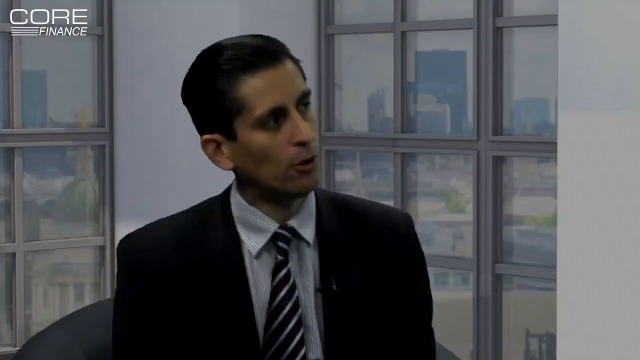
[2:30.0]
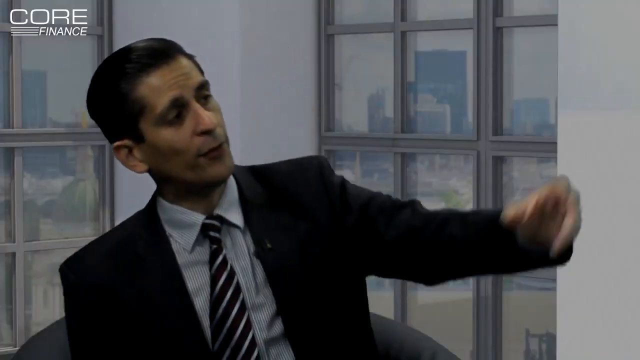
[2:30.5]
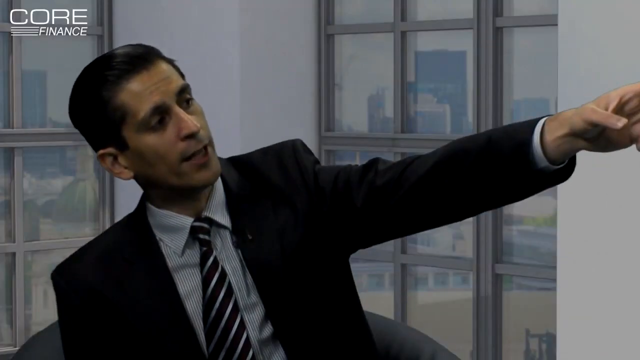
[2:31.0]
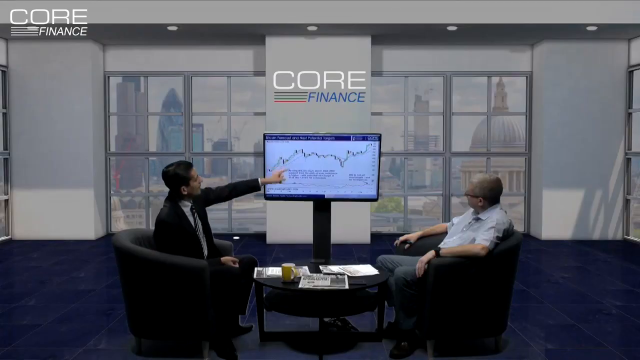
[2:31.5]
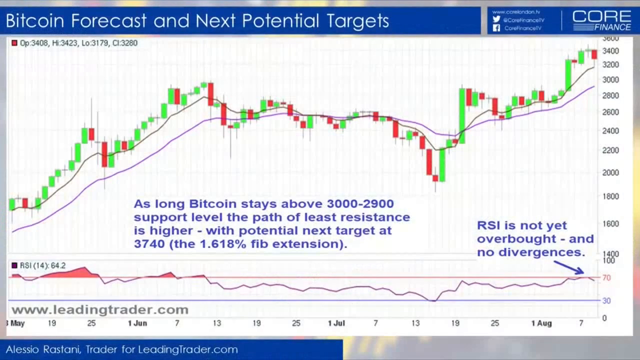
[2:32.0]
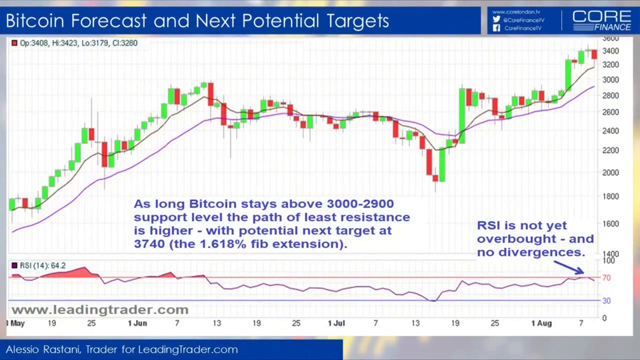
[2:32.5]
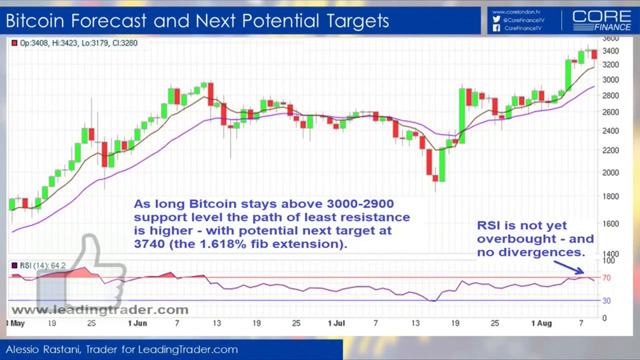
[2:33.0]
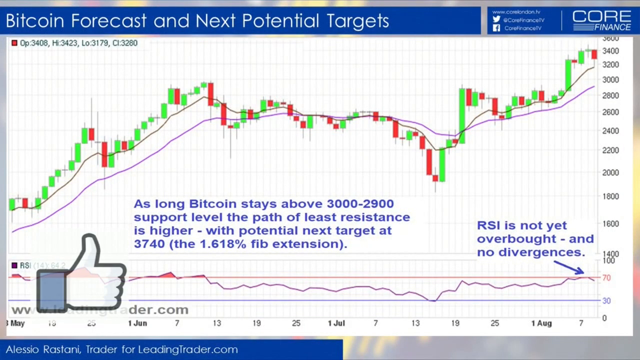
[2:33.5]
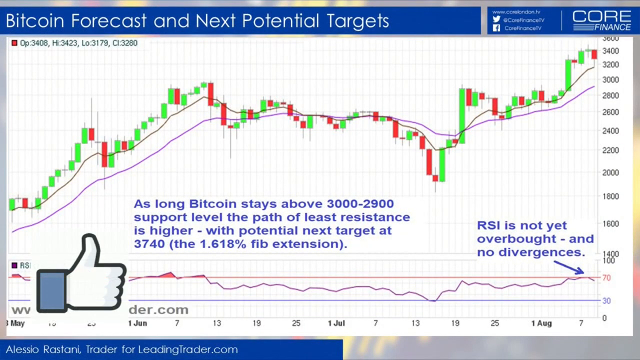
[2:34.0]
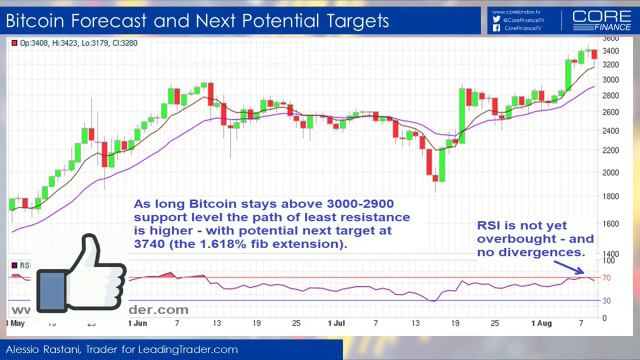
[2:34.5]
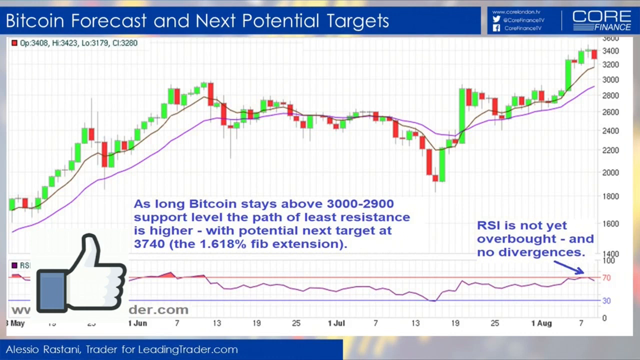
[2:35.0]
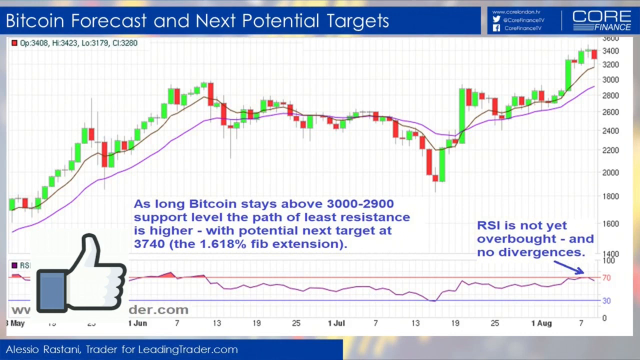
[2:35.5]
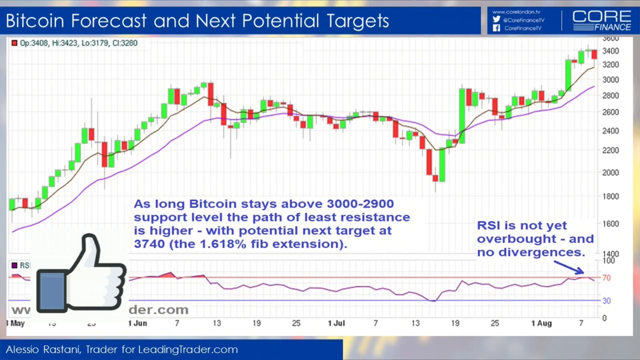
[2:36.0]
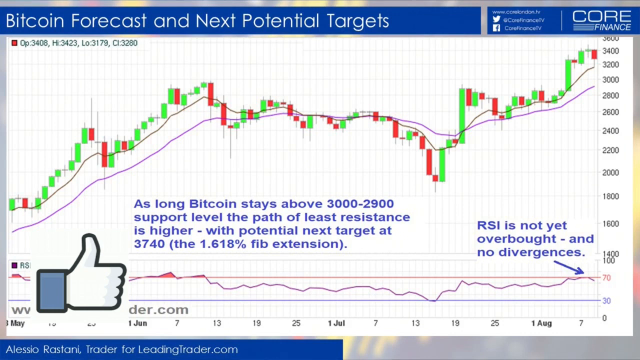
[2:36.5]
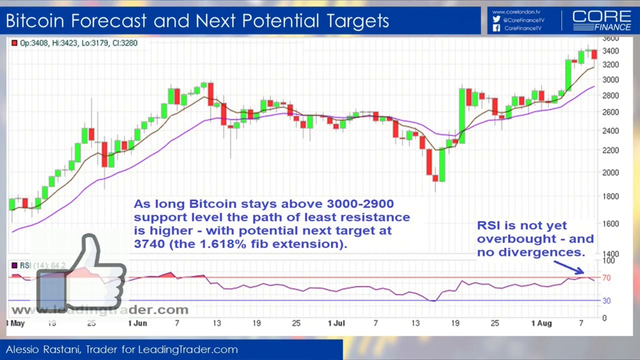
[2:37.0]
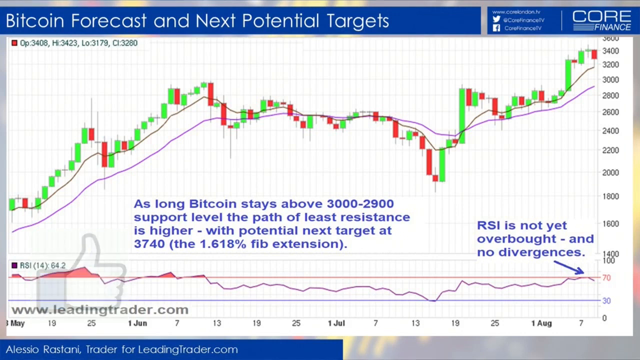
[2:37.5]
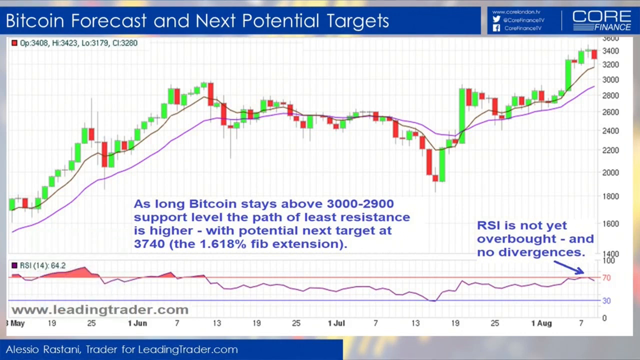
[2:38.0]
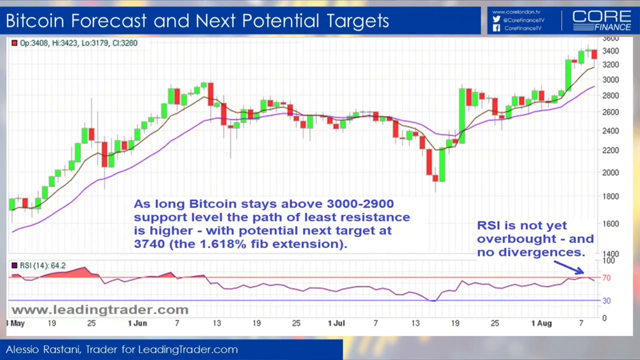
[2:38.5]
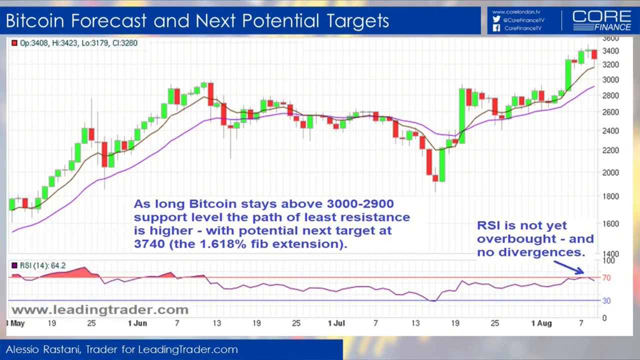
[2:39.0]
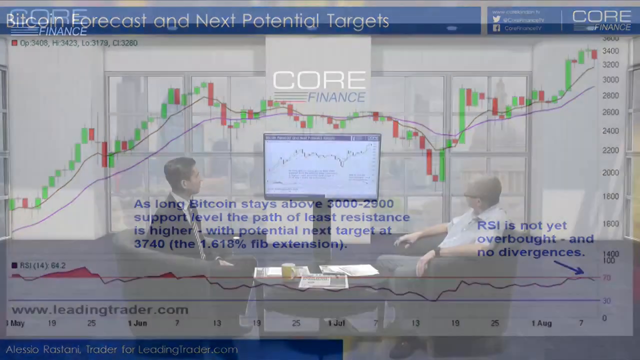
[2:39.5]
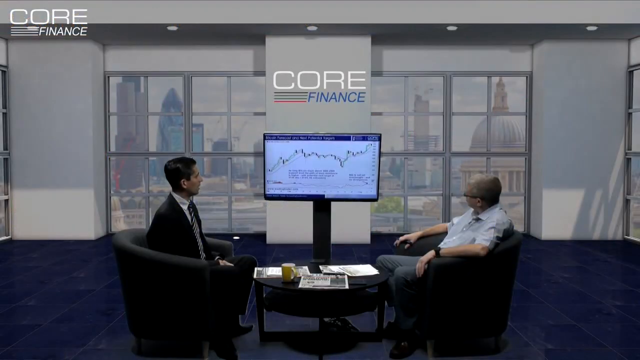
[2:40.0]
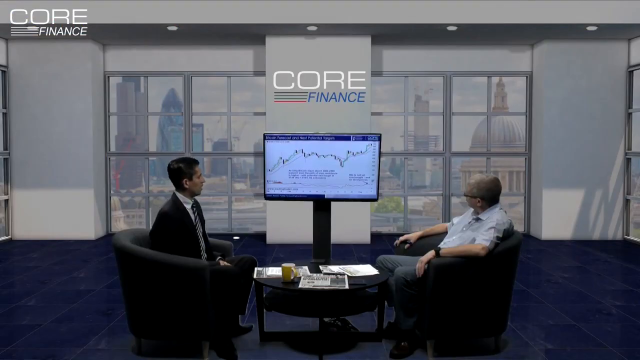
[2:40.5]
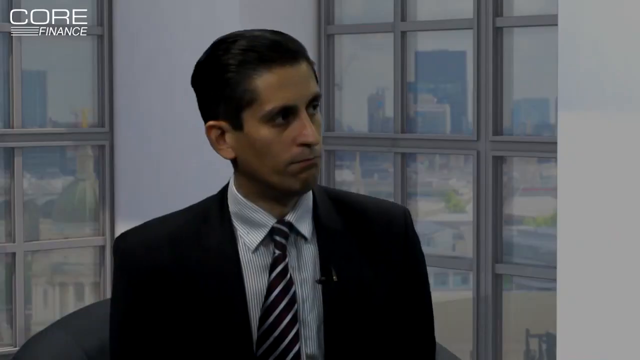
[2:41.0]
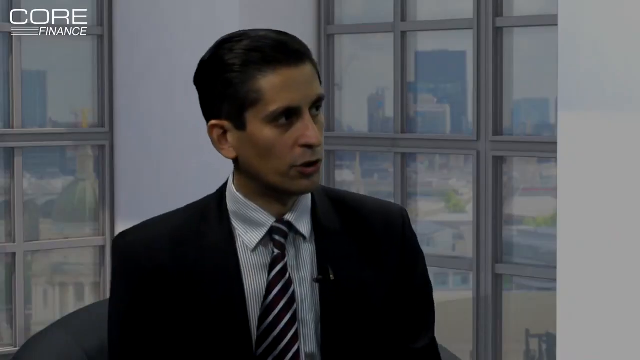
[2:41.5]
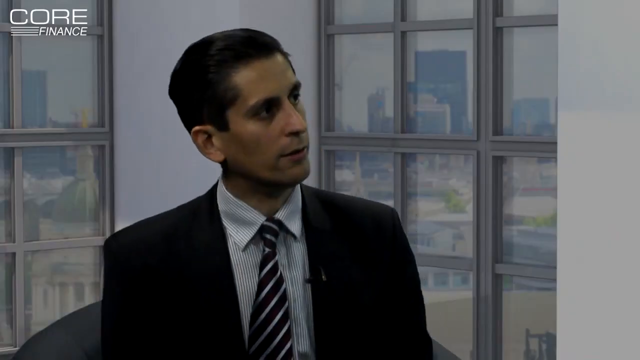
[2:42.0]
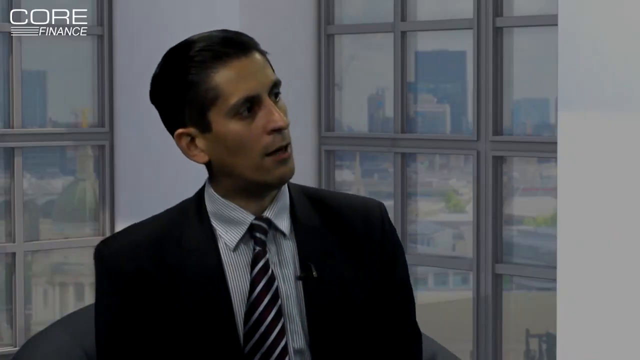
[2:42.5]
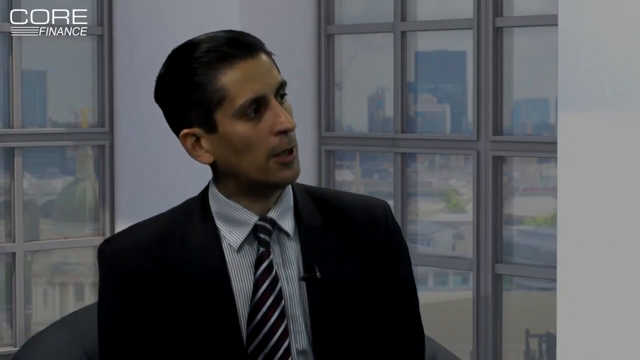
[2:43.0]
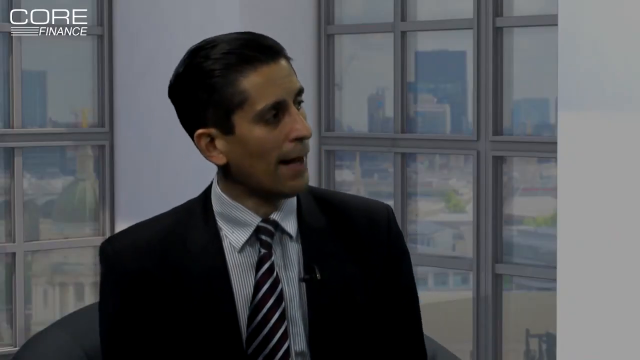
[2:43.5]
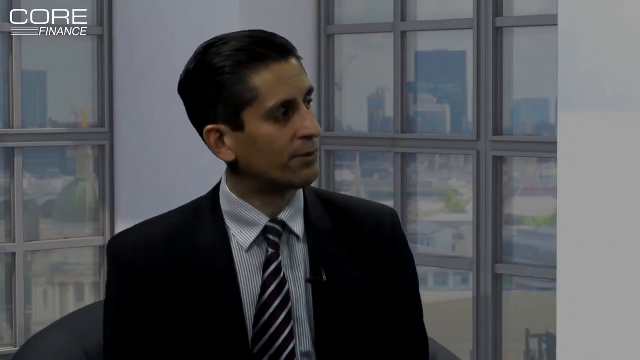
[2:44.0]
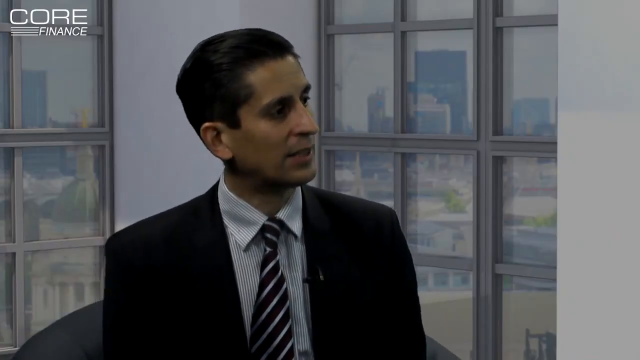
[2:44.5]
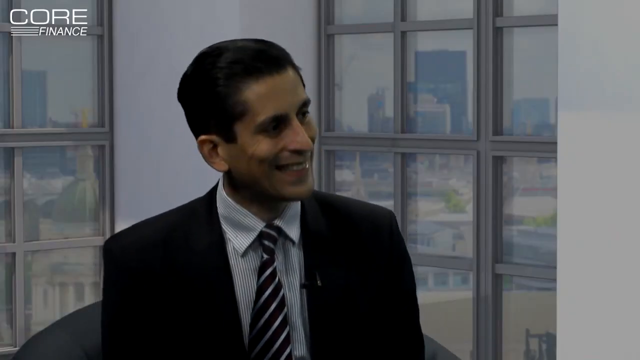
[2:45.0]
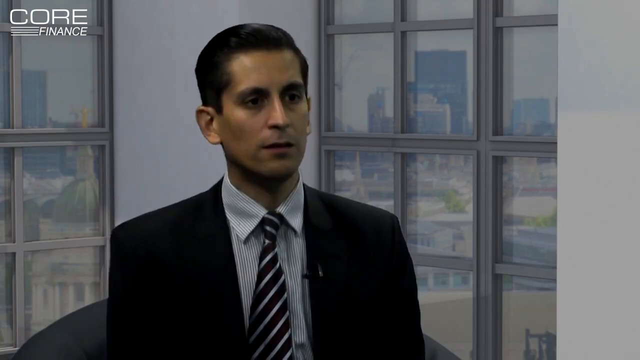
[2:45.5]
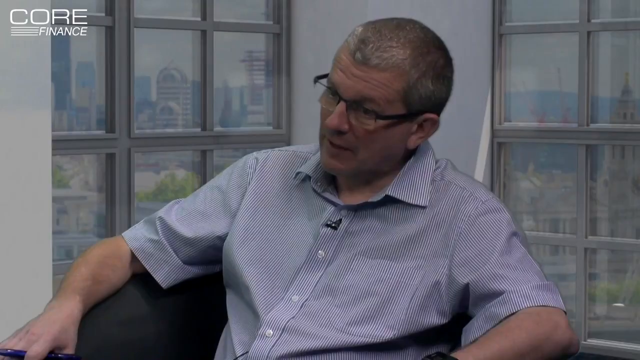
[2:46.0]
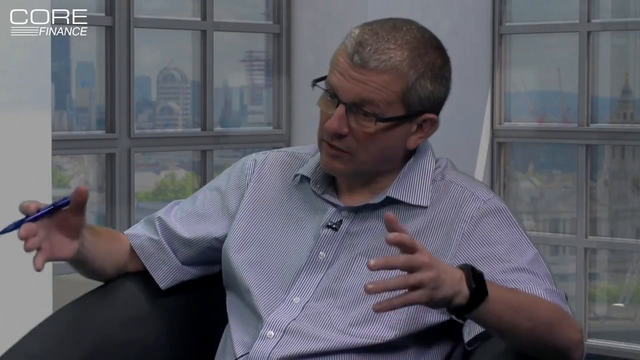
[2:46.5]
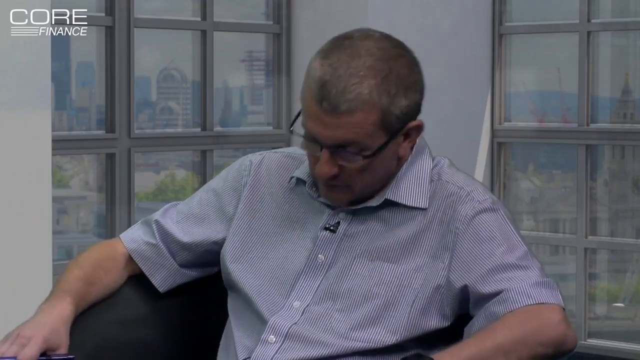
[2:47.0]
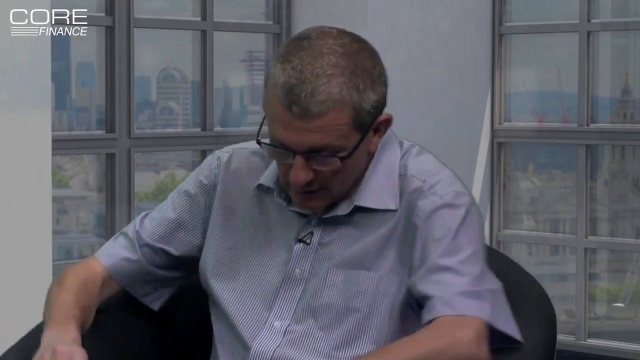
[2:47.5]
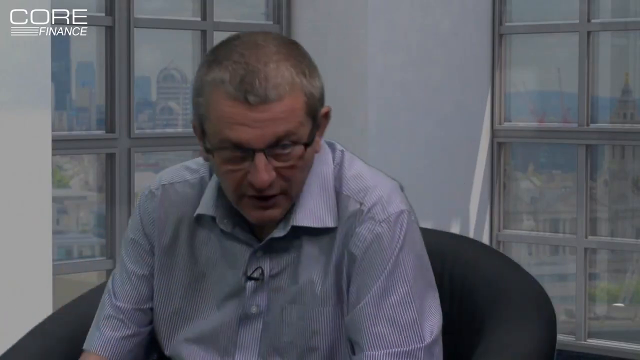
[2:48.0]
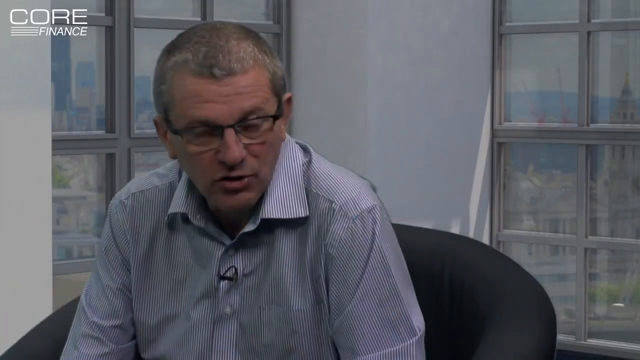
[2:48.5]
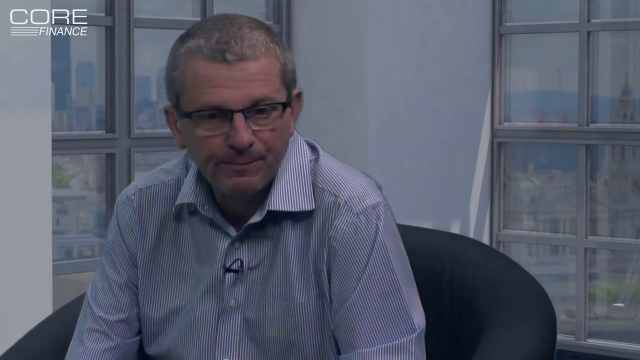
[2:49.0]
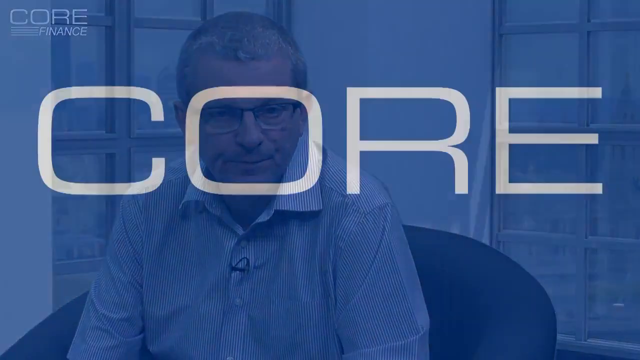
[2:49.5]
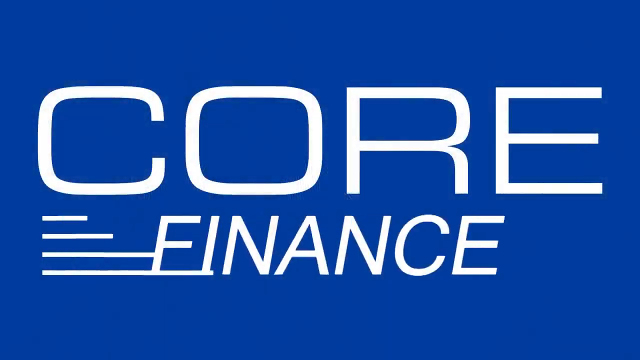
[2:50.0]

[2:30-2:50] The two gentlemen are still conversing, taking turns to speak and gesturing with their hands, and a like button keeps appearing at the bottom left. The Bitcoin forecast chart has two line graphs drawn on top of the candlesticks, following the shape of the candlesticks and representing the market trend. The opening candle is 3408 and the closing candle is 3280.